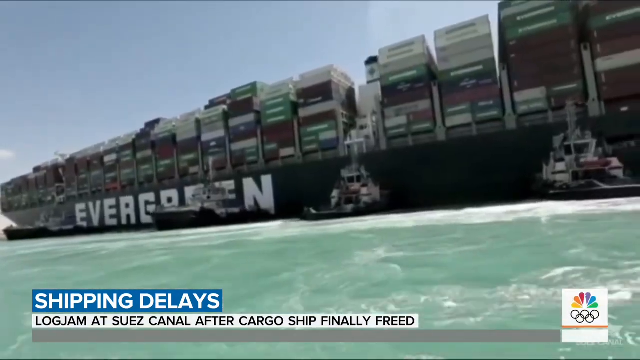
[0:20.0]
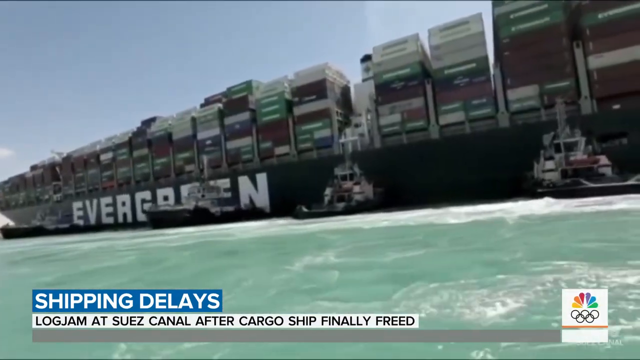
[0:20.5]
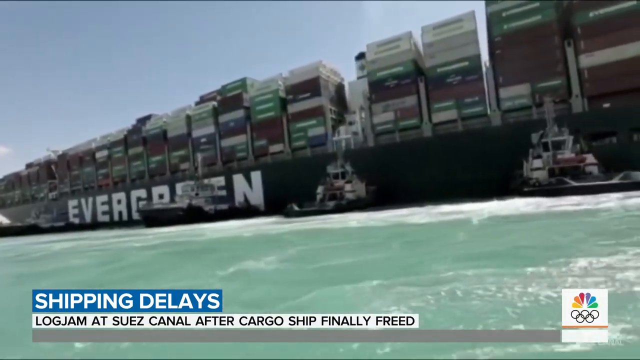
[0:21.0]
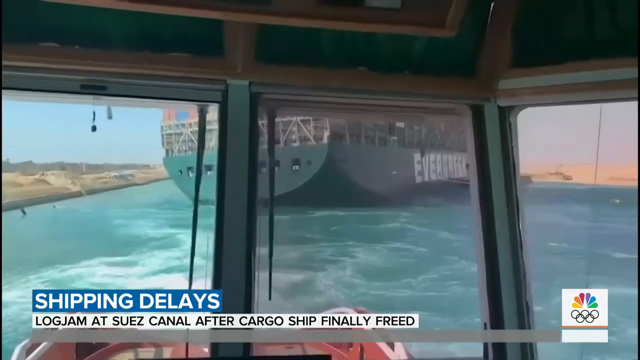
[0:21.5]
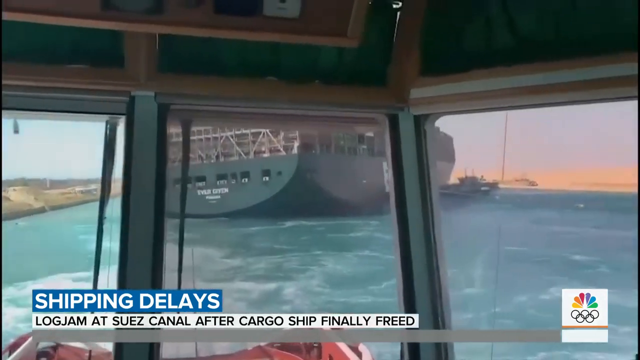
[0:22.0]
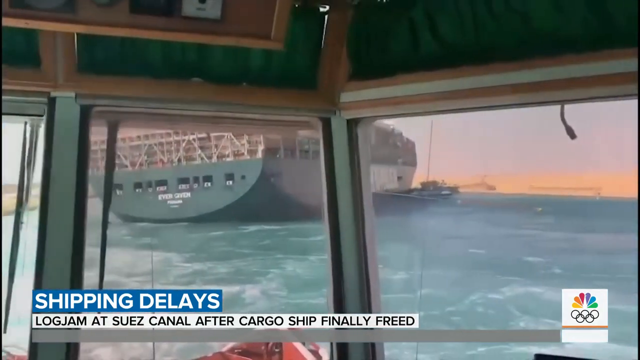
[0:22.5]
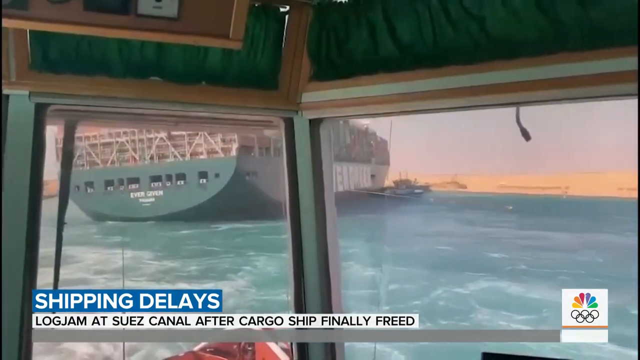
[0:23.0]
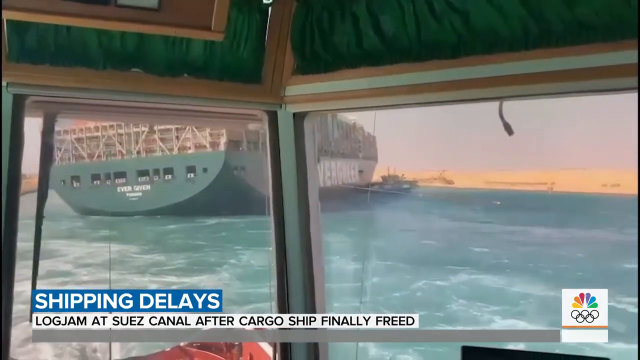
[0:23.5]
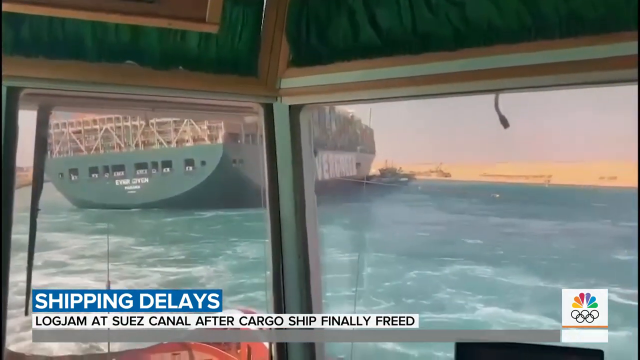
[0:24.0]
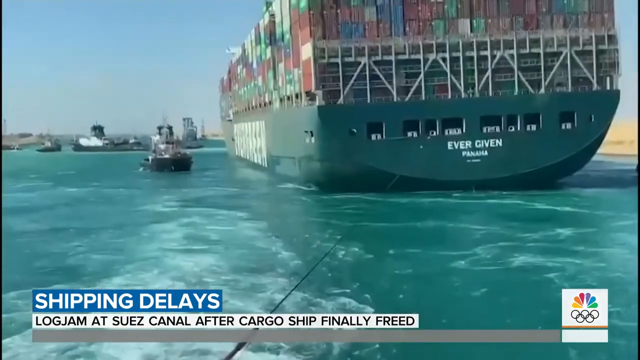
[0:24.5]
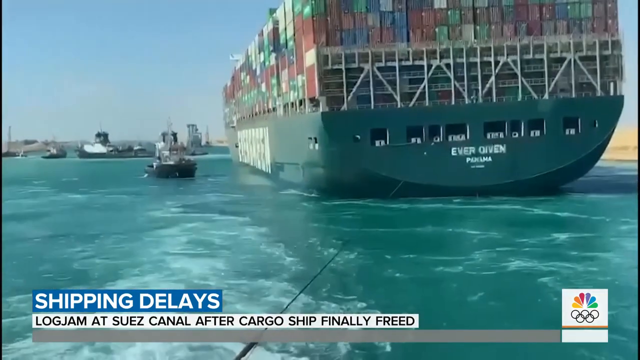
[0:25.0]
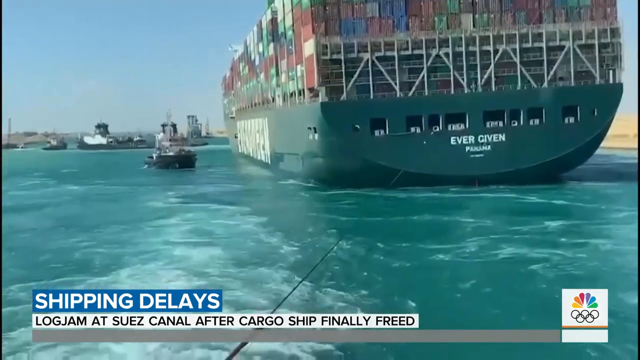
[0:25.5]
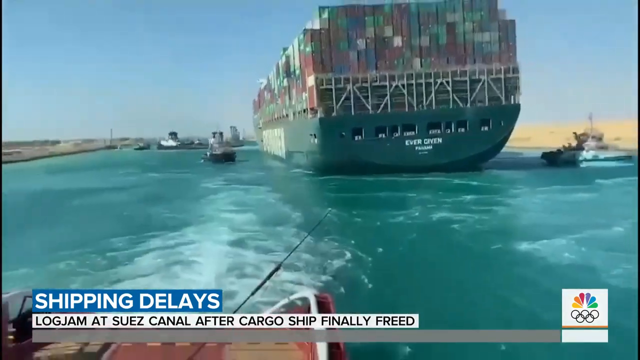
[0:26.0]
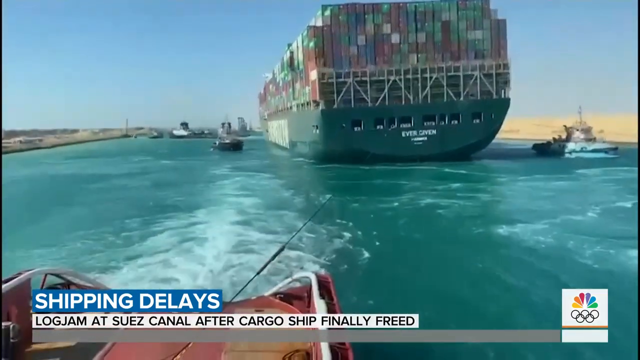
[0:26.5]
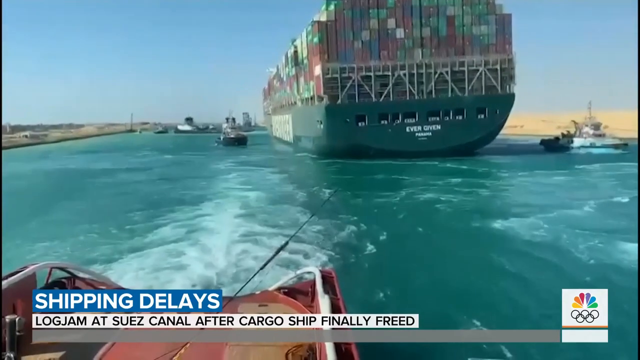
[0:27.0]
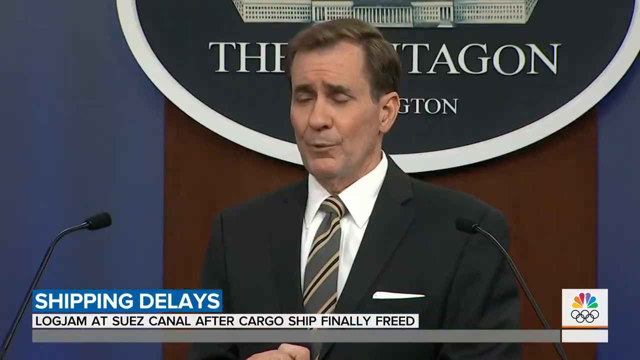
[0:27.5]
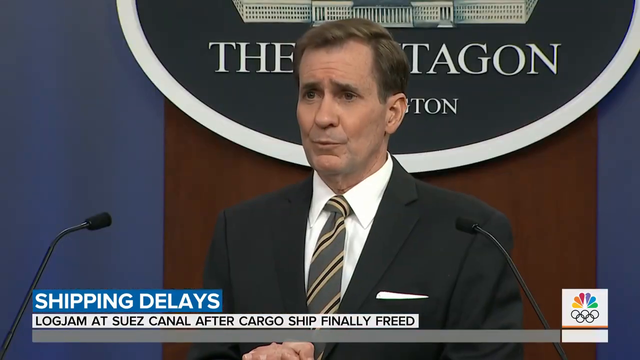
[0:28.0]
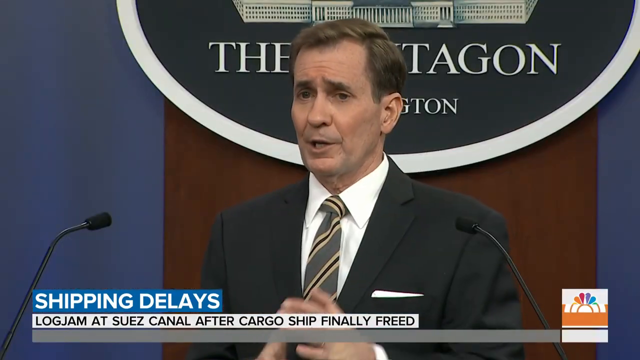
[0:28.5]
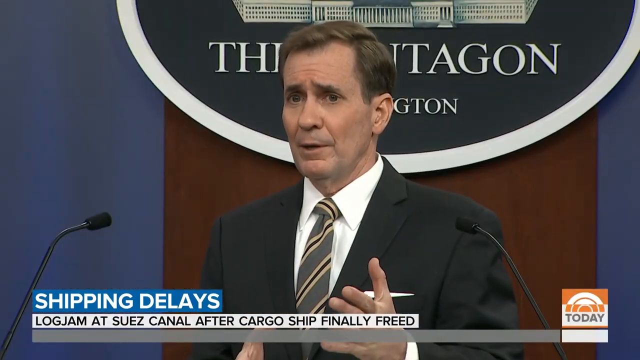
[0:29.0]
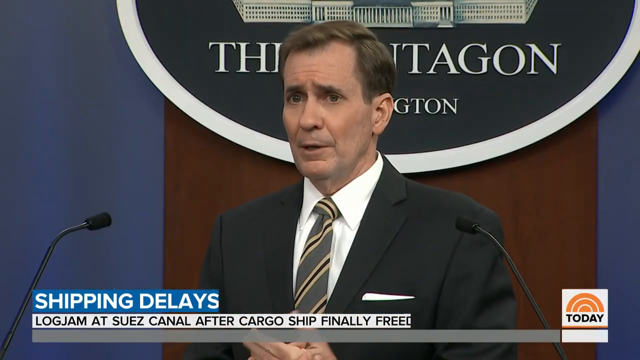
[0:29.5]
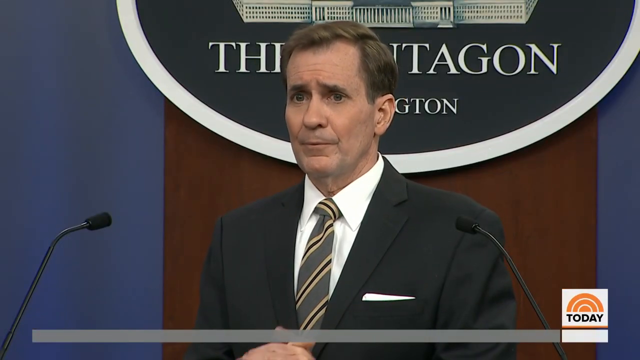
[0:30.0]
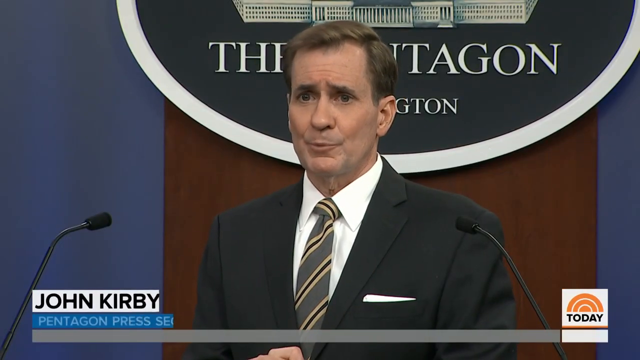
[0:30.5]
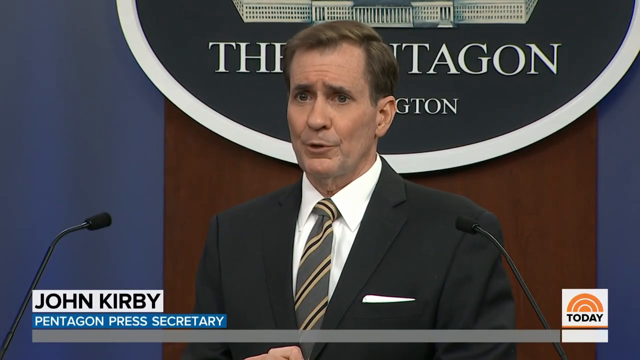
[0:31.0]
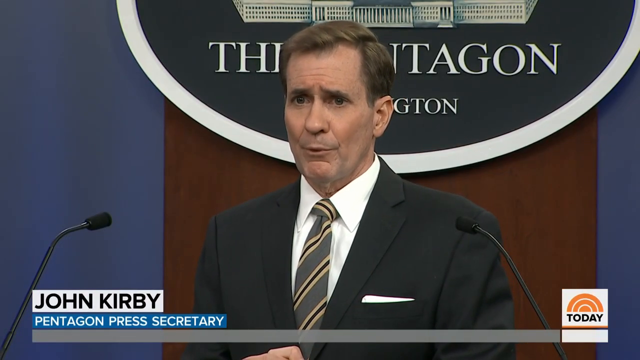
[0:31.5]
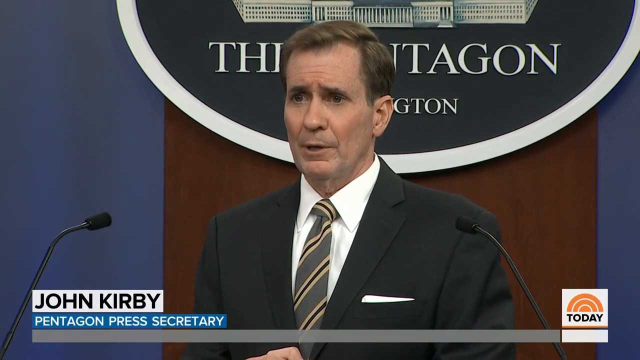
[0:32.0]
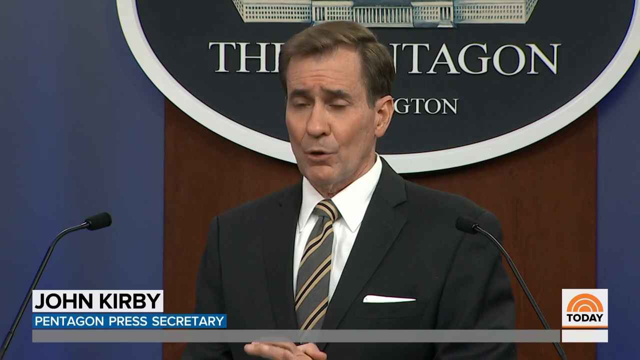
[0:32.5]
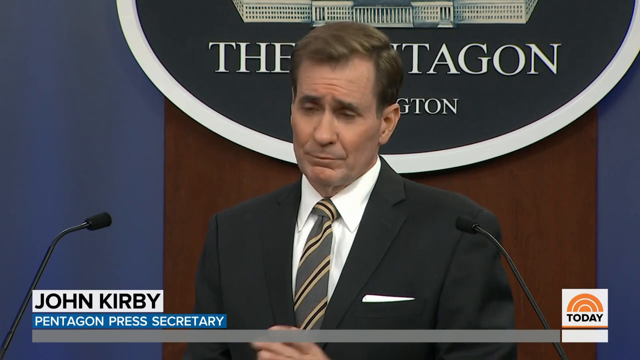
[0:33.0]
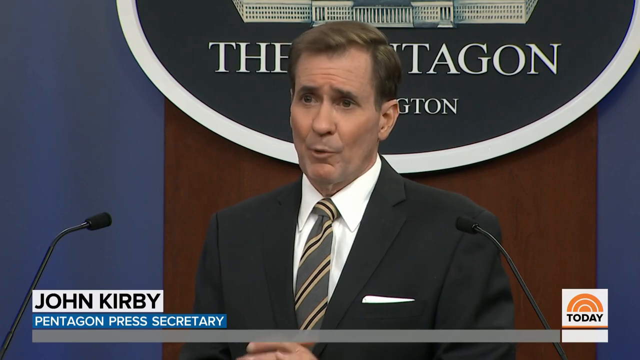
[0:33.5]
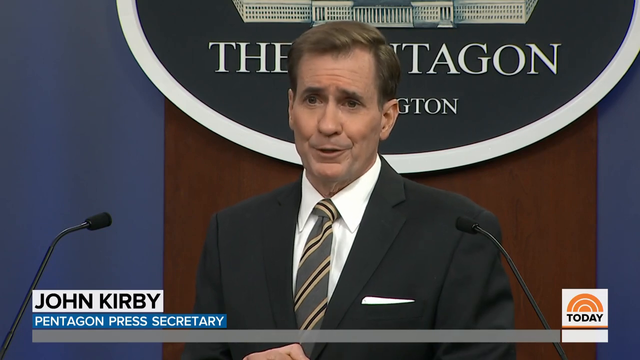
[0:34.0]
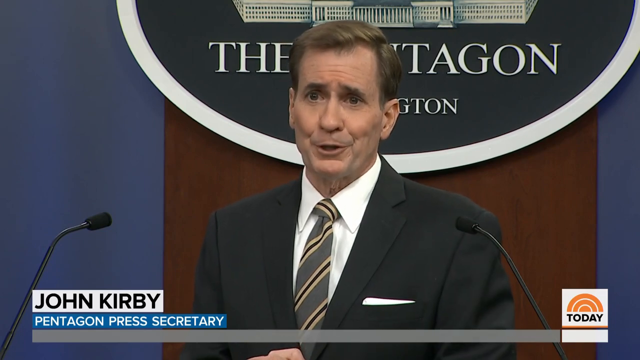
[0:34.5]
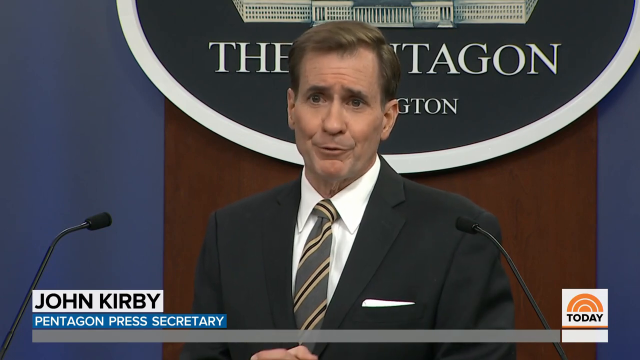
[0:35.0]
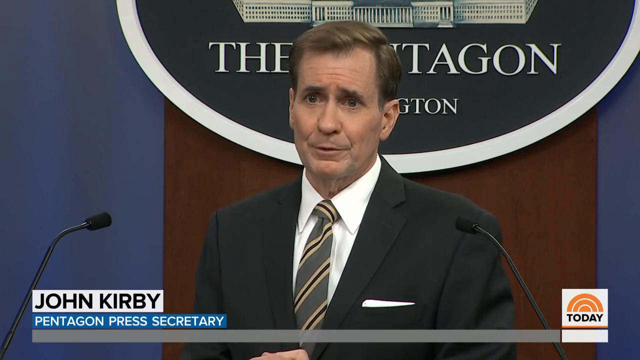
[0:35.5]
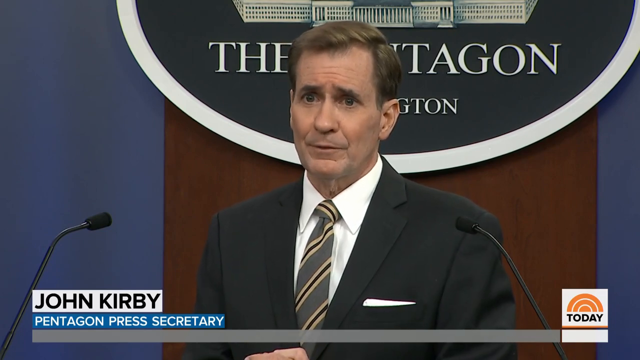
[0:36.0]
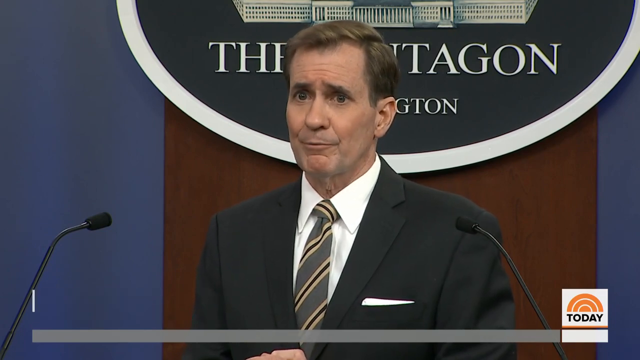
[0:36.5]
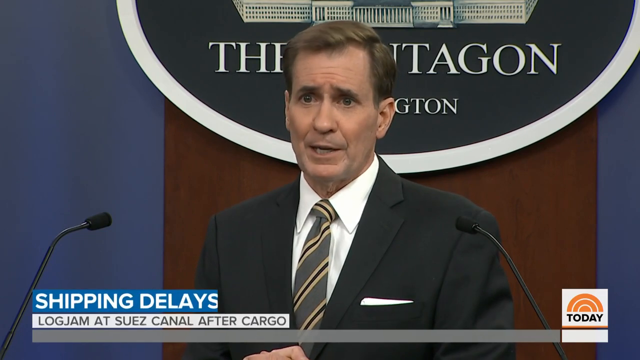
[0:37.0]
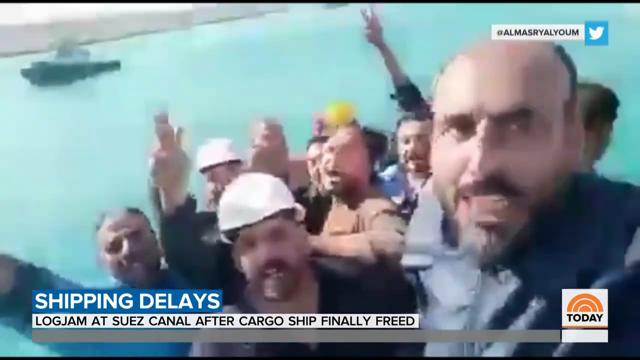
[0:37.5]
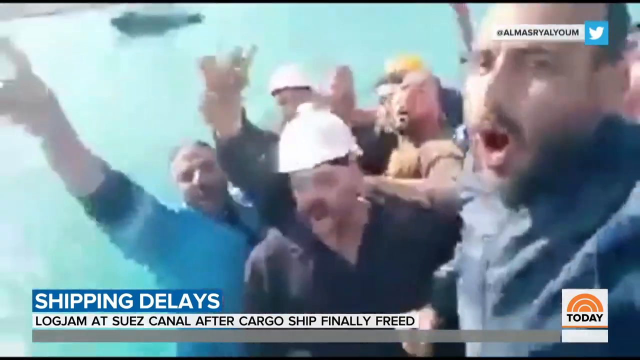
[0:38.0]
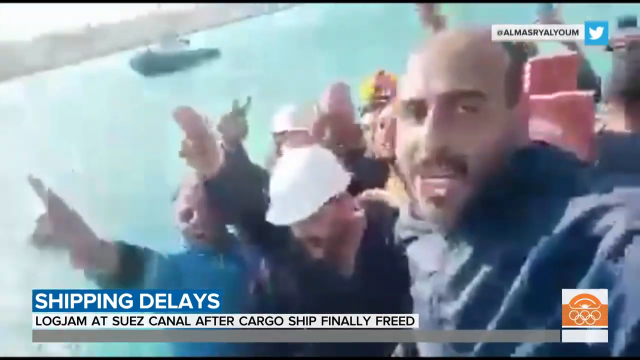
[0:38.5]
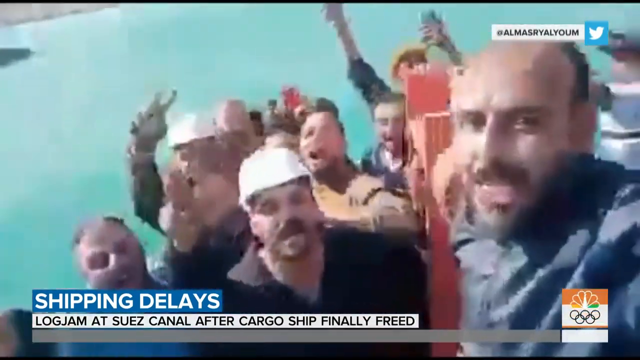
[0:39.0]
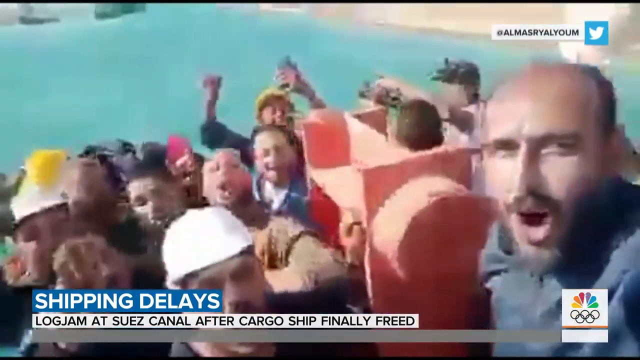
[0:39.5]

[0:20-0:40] The very large cargo ship appears with some smaller boats parked right at its side. Next comes a view out of a window at a ship and the body of water, followed by a similar but reversed angle showing the back end of the boat, the surrounding water and ships in the distance. The camera zooms out, showing a boat moving to the right and the blue sky above. A man in a black suit with a gray and black striped tie then speaks, with two microphones, one to his left and one to his right. He is standing at a stand, and the background is blue and brown, with the bottom half of a circular sign above. Text in the bottom left corner of the screen identifies him as John Kirby, Pentagon Press Secretary. He keeps talking into the camera, his eyes open the whole time. The next scene shows some people jumping up and down, apparently celebrating.